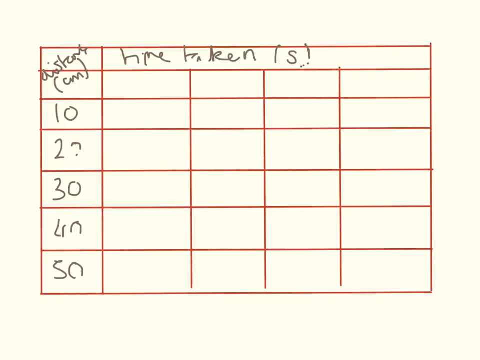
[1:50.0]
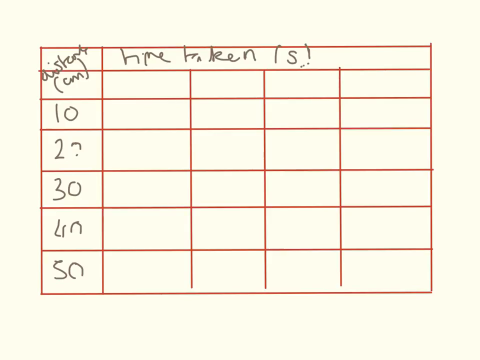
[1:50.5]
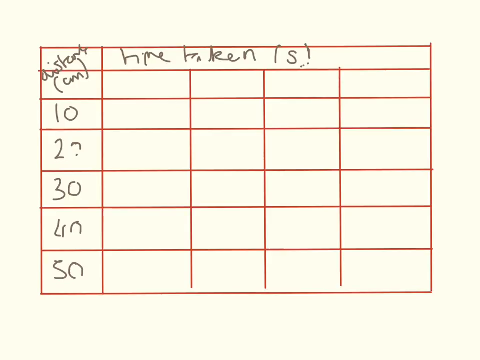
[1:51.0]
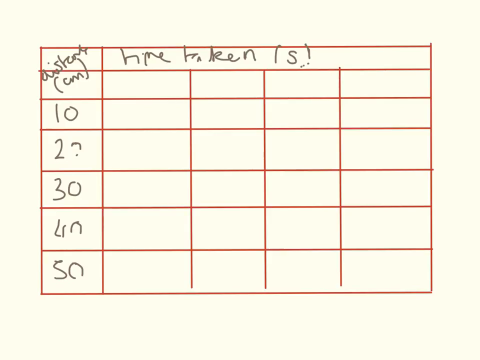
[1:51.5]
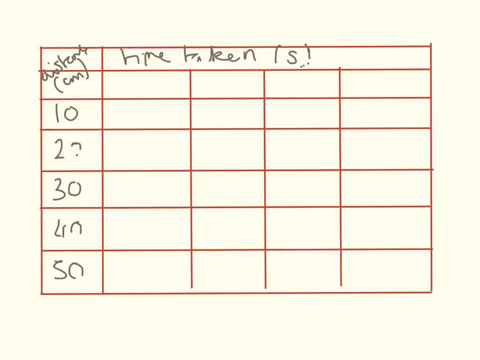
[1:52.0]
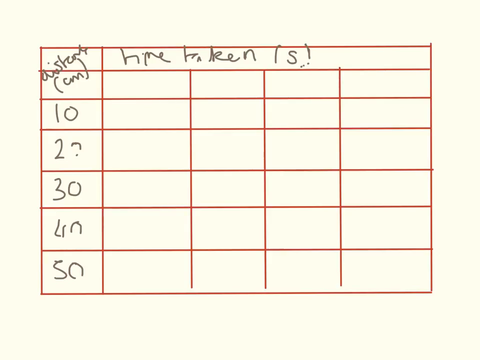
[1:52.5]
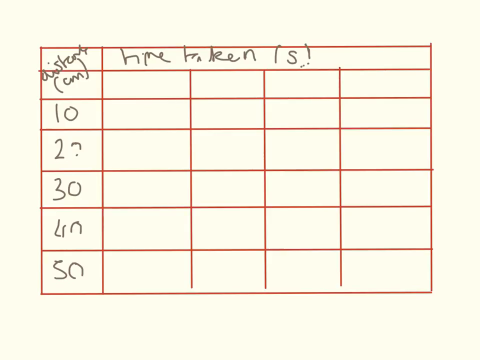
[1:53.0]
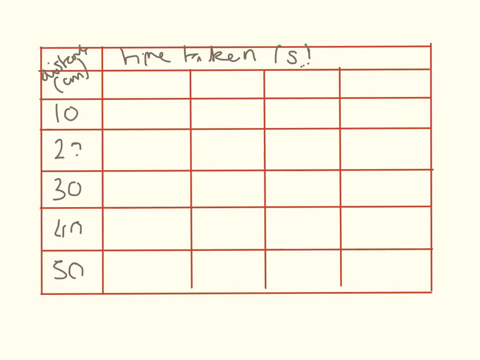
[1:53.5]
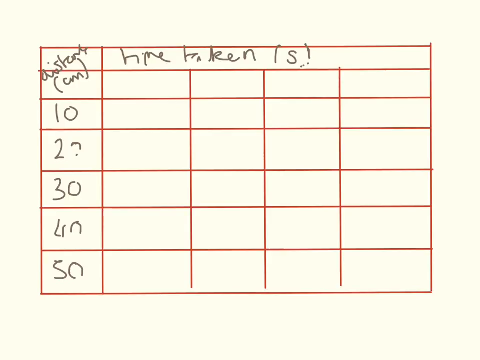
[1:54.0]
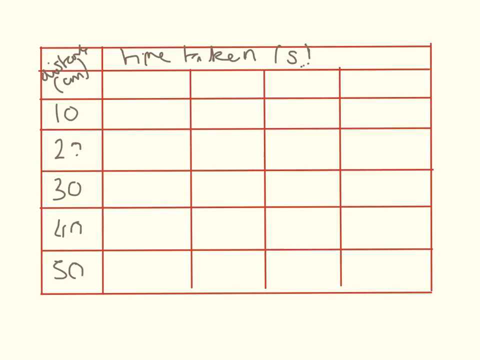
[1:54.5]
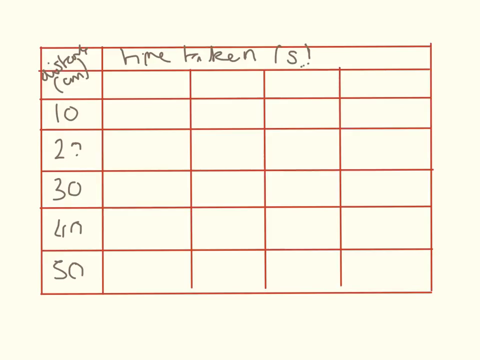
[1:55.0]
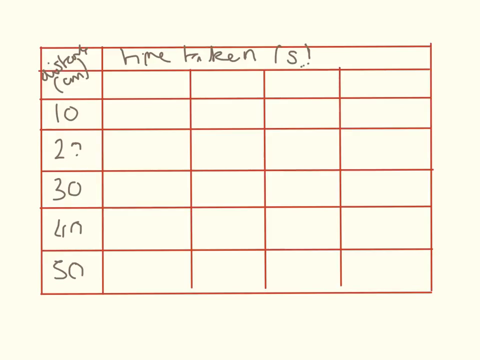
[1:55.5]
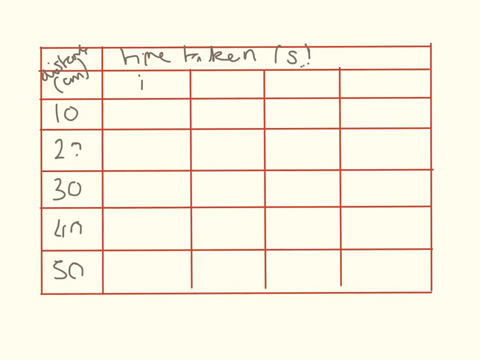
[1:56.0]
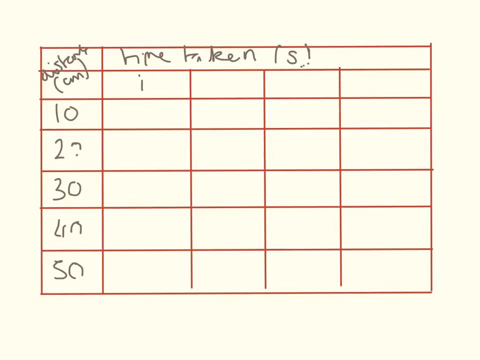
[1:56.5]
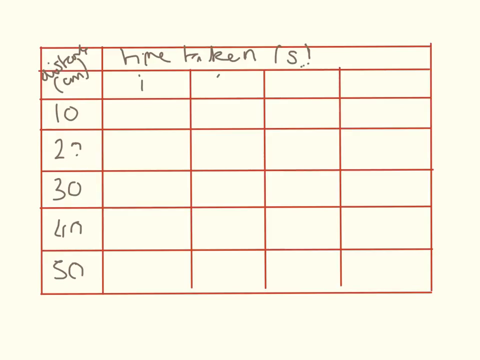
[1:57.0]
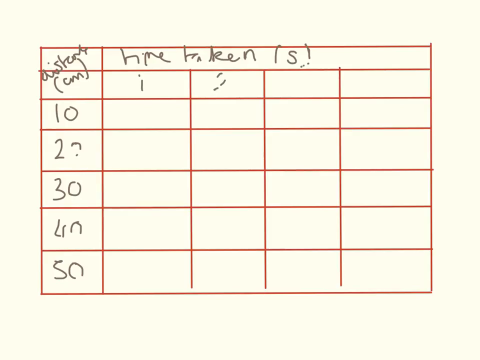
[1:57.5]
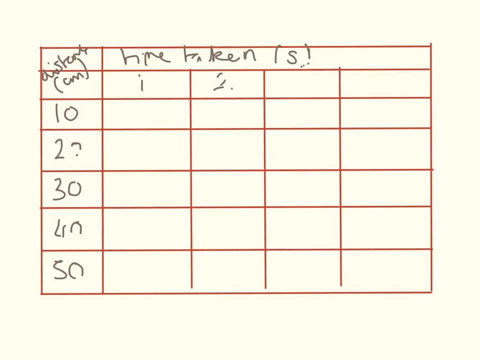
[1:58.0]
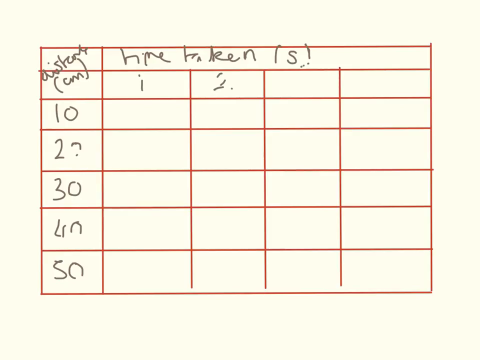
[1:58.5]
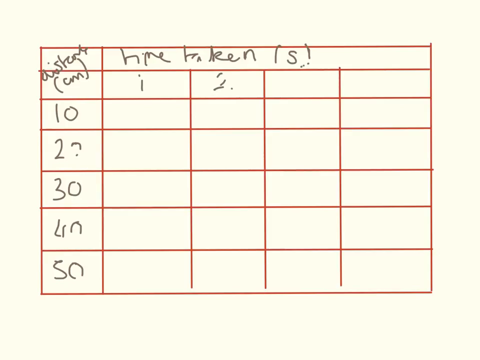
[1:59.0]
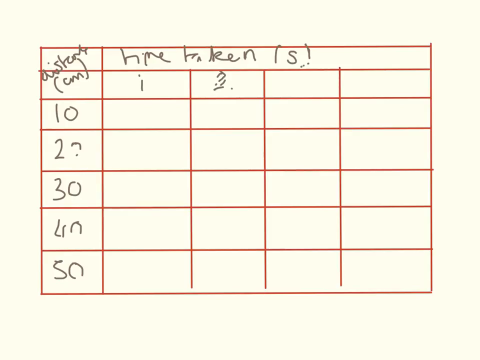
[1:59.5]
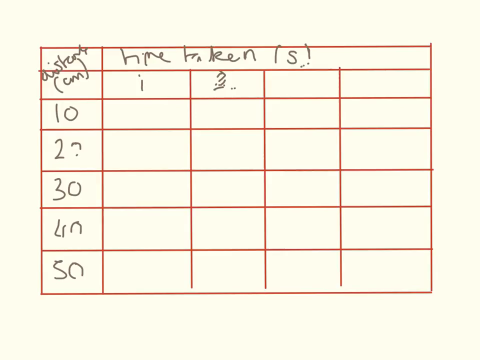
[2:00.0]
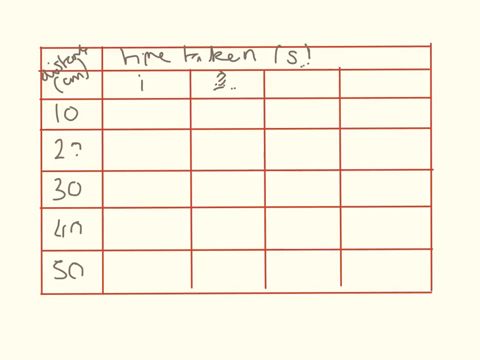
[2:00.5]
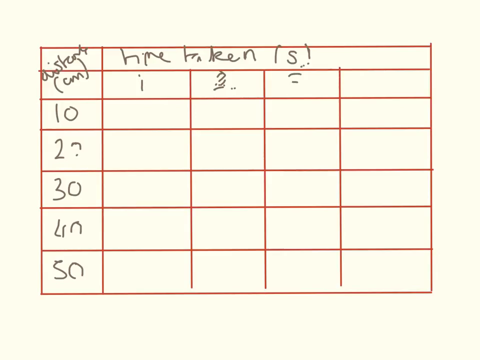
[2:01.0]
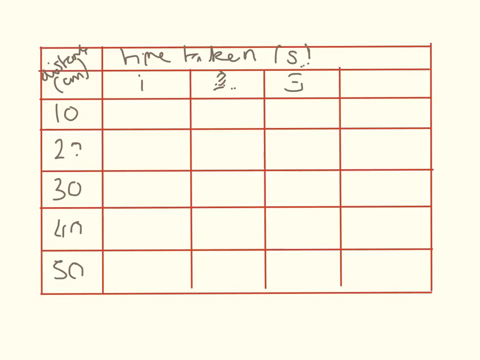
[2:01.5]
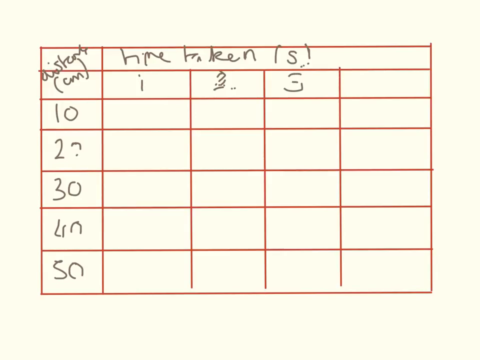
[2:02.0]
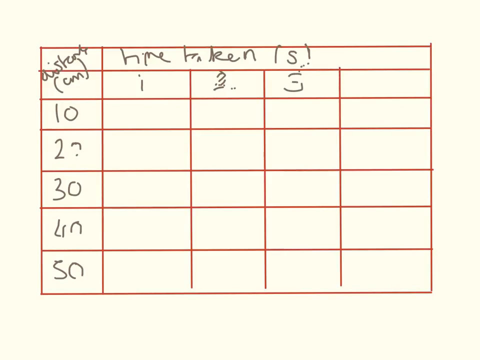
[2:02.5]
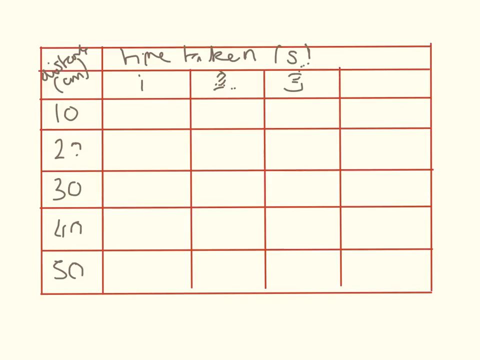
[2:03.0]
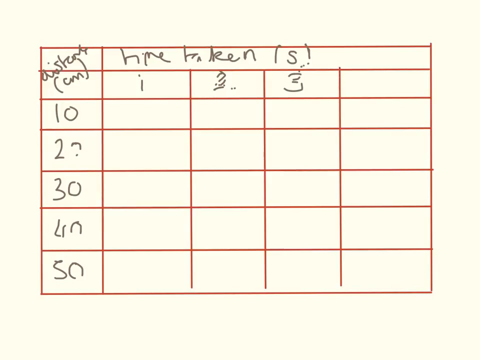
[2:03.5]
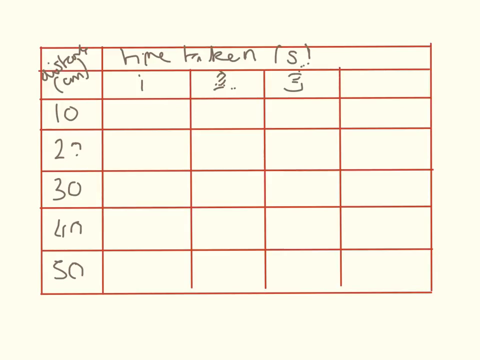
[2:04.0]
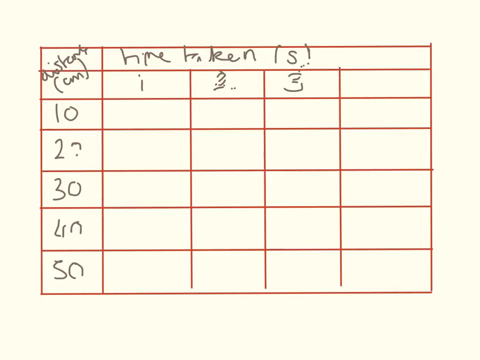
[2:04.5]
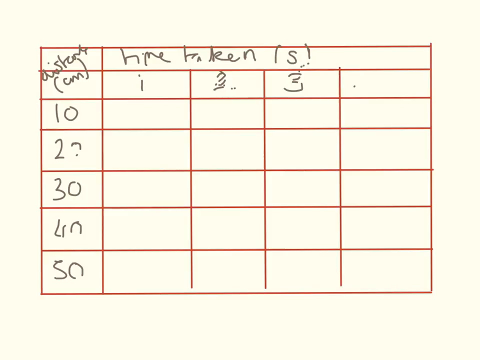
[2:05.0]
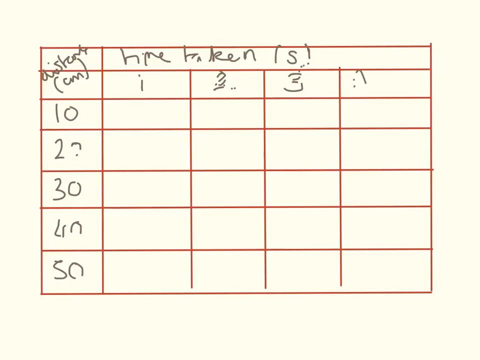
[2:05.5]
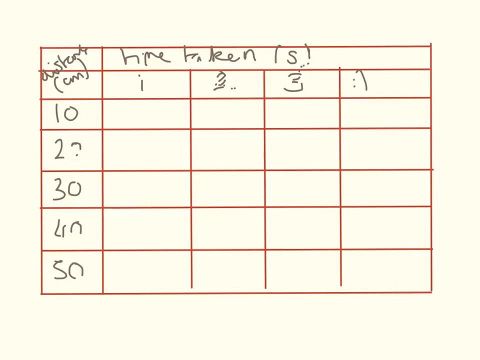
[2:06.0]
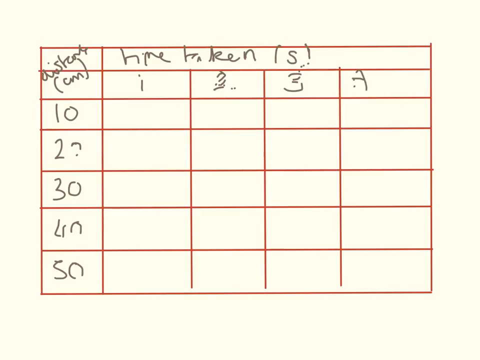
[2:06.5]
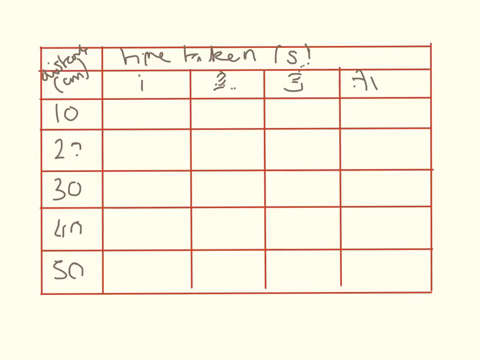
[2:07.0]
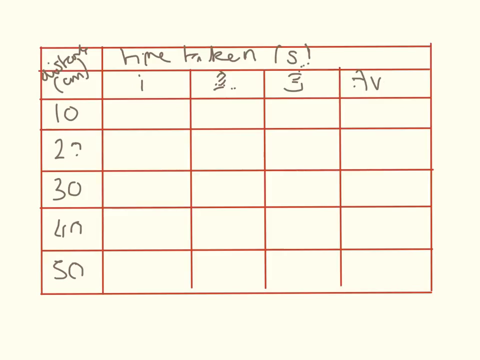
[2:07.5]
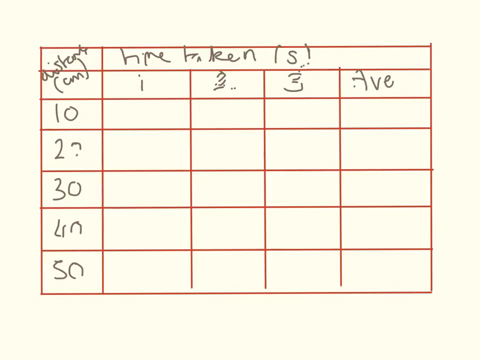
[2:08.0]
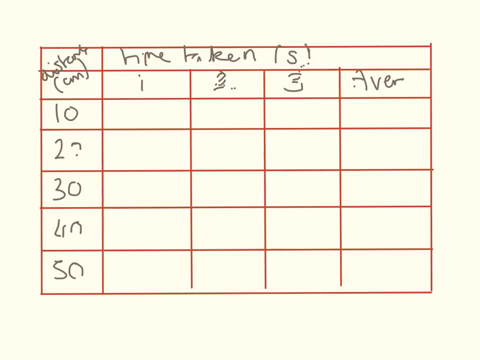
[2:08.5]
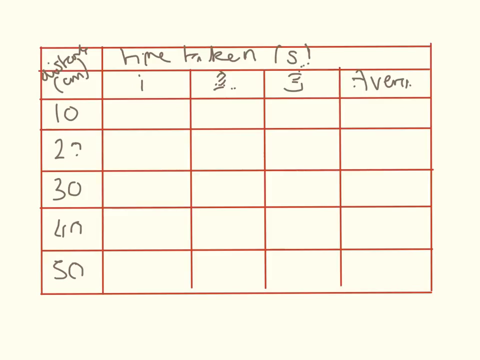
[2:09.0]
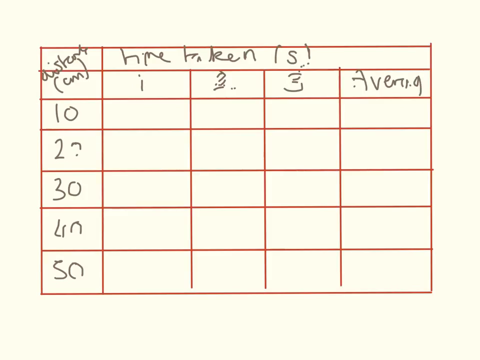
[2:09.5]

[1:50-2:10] A large red grid box is on a yellow background, with four vertical lines and six horizontal lines, and the boxes are all different sizes, some larger and some smaller. A section at the top is for writing a title. On the left side there is information about centimeters: text reading "cm" with the numbers 10, 20, 30, 40 and 50, some of them broken up with gaps. The text at the top looks like it says "taken is." The numbers one, two and three are written in, very sloppy and hard to make out, and then something that looks like "average" is written in the box to the right of them.